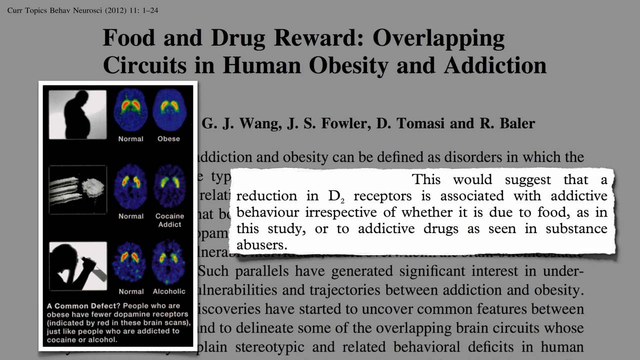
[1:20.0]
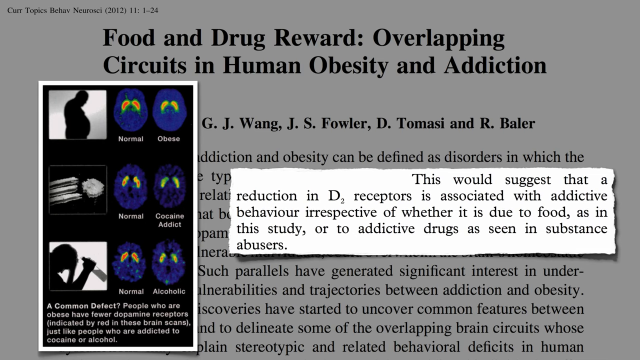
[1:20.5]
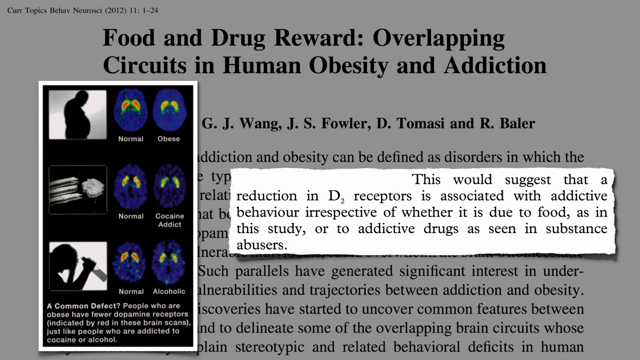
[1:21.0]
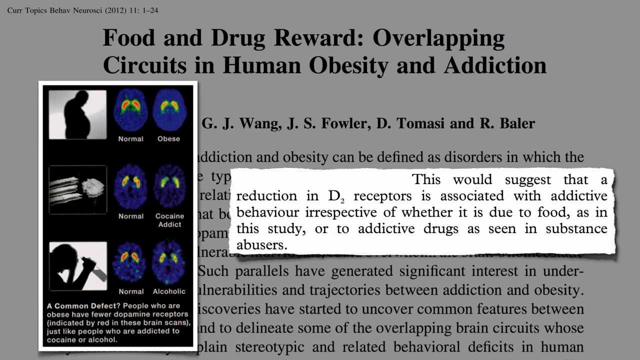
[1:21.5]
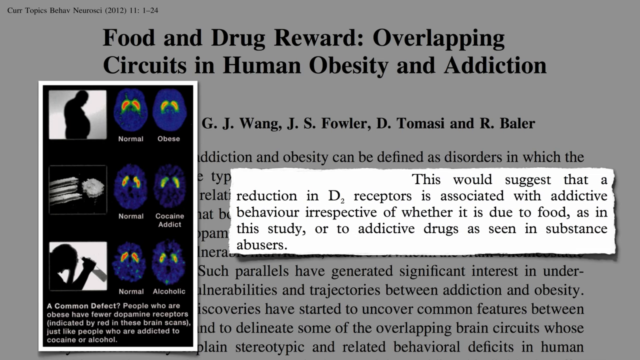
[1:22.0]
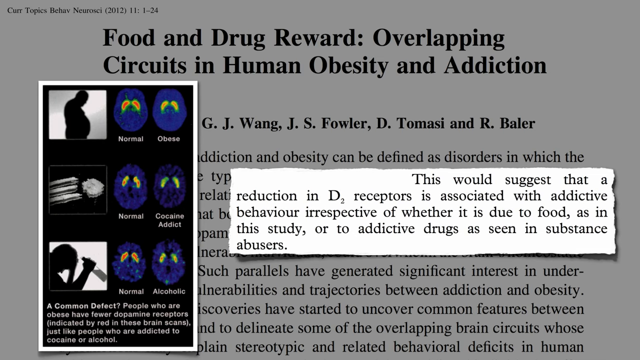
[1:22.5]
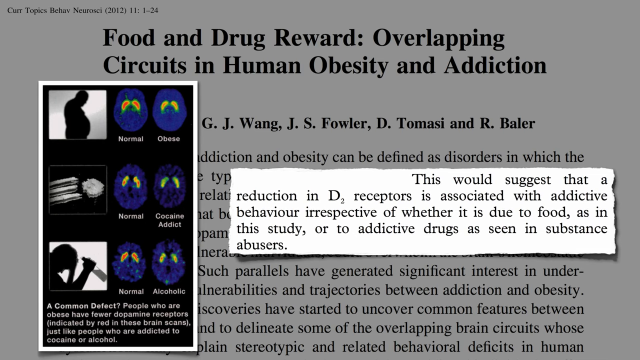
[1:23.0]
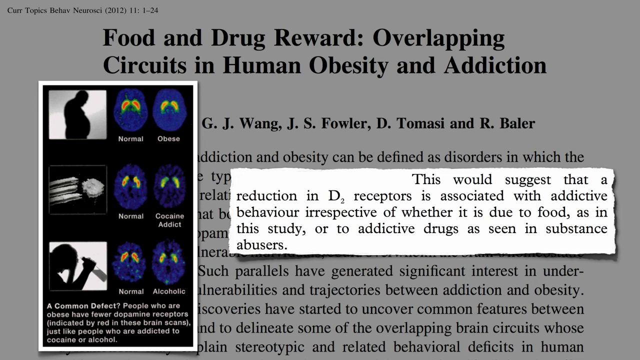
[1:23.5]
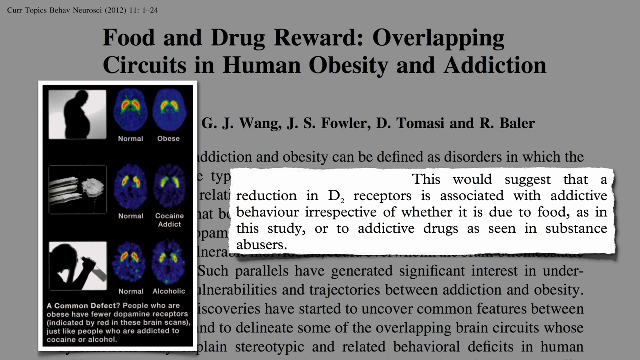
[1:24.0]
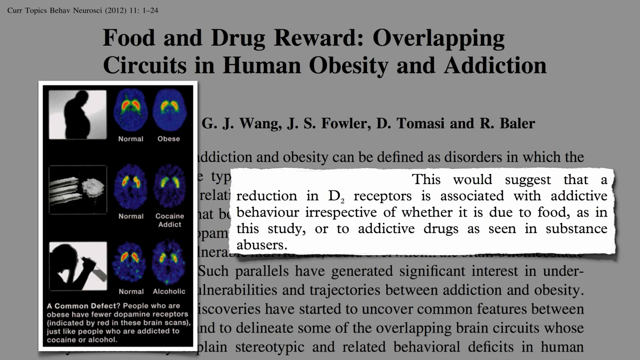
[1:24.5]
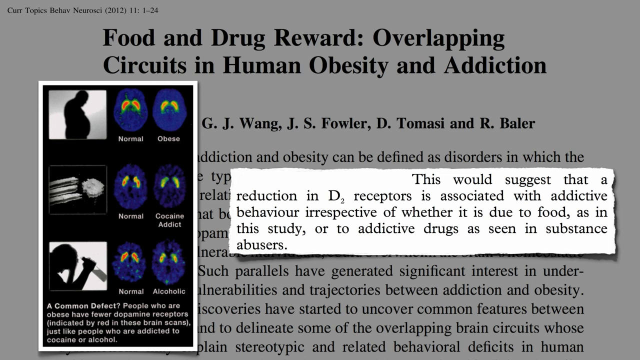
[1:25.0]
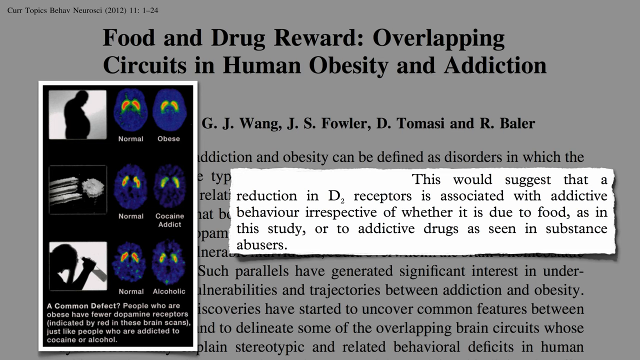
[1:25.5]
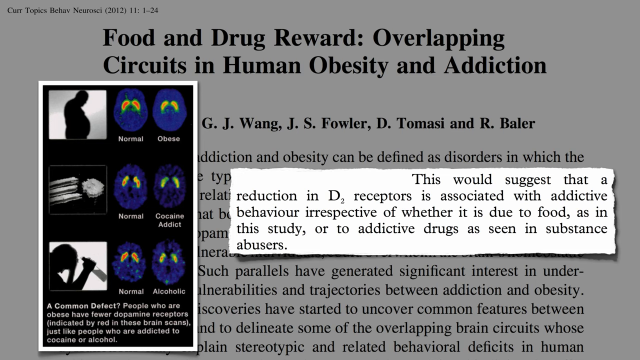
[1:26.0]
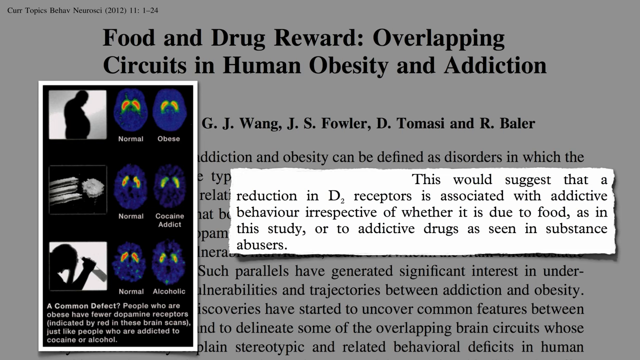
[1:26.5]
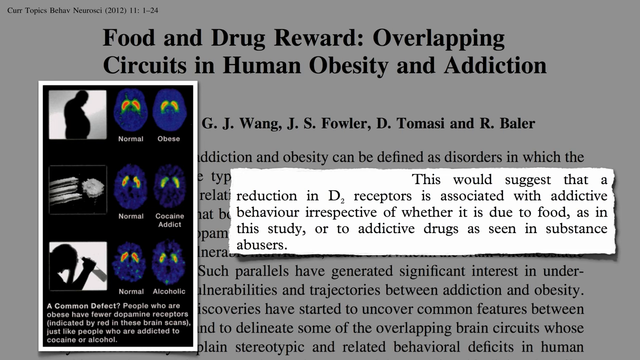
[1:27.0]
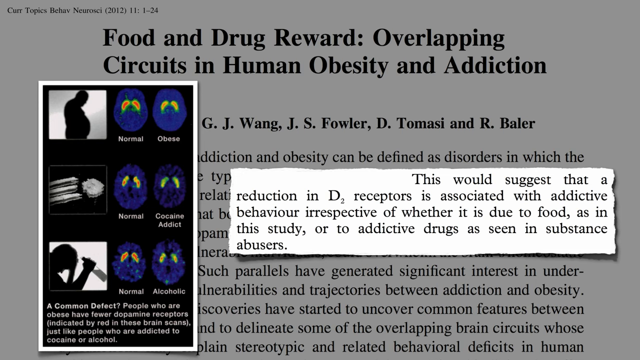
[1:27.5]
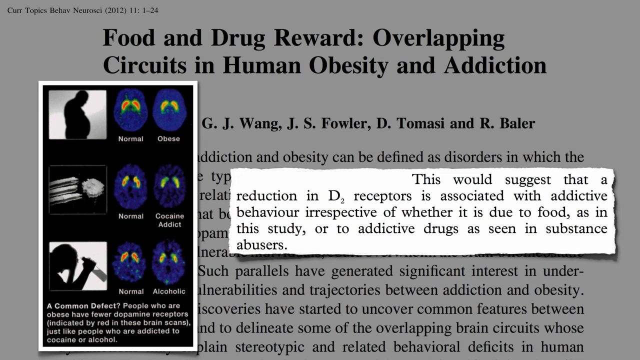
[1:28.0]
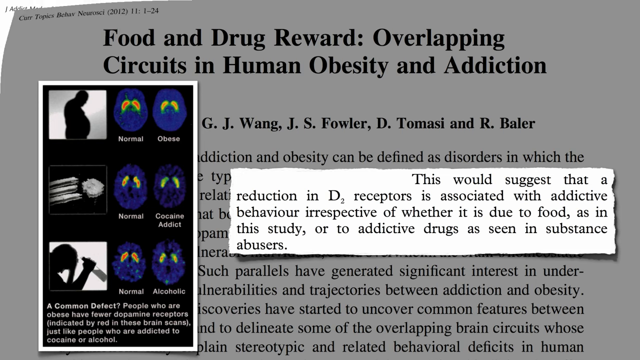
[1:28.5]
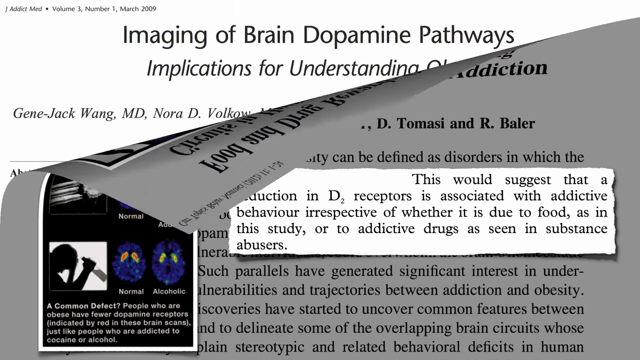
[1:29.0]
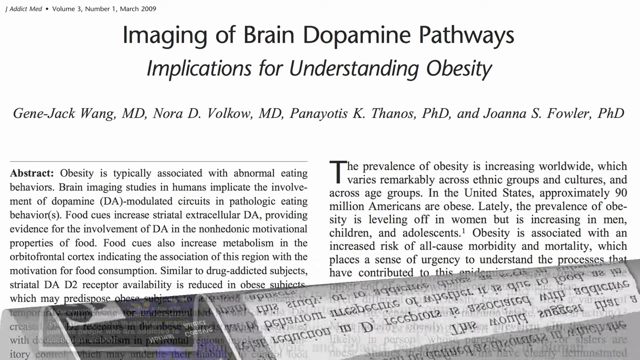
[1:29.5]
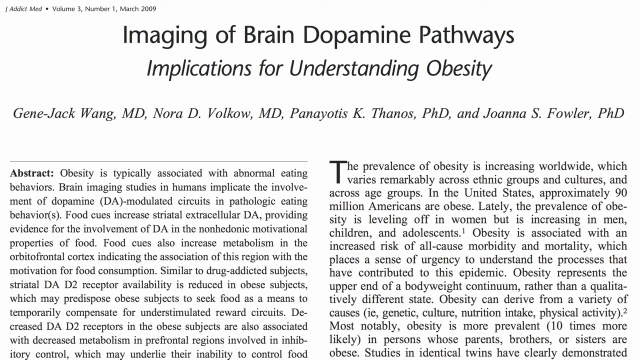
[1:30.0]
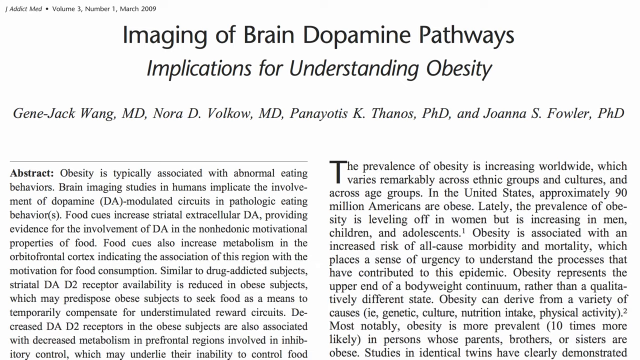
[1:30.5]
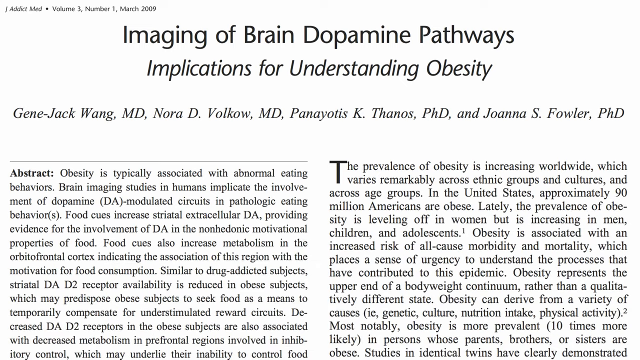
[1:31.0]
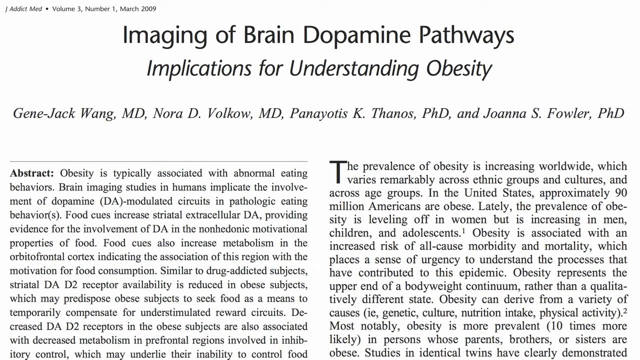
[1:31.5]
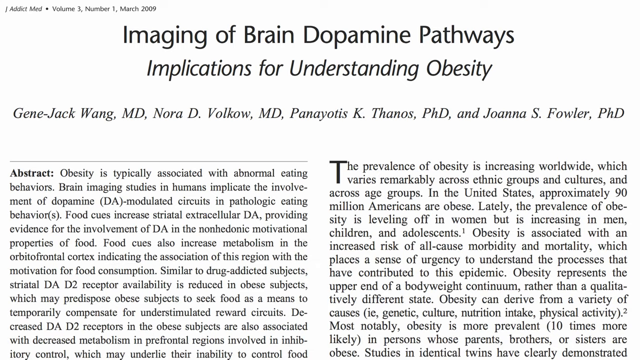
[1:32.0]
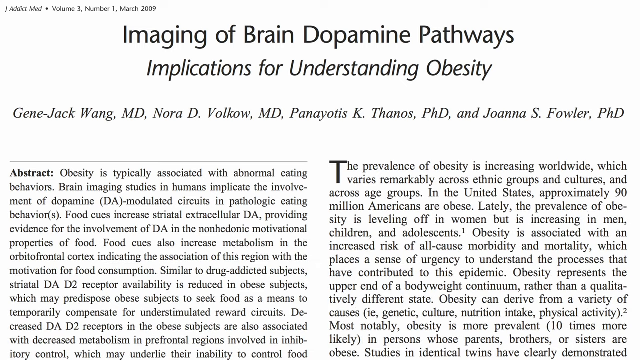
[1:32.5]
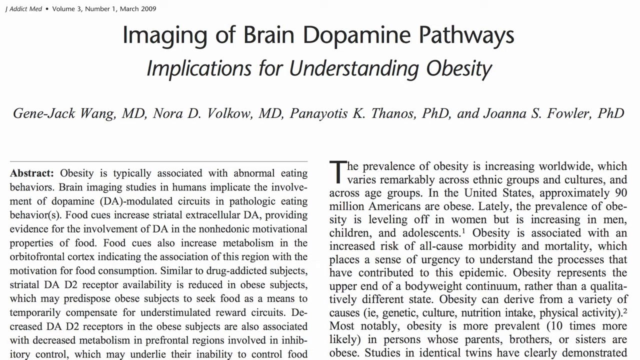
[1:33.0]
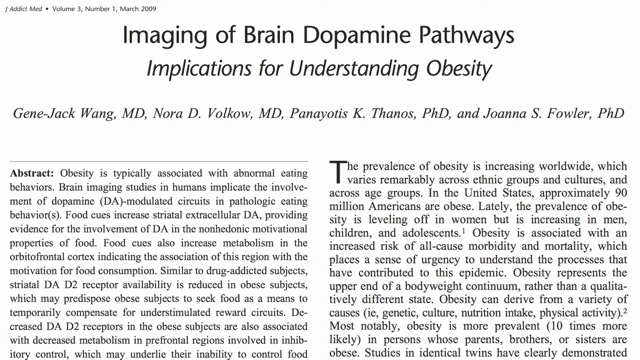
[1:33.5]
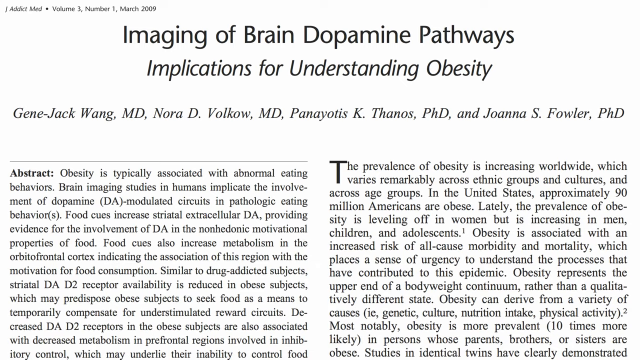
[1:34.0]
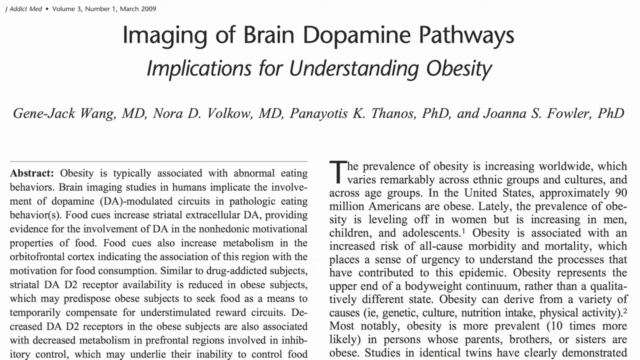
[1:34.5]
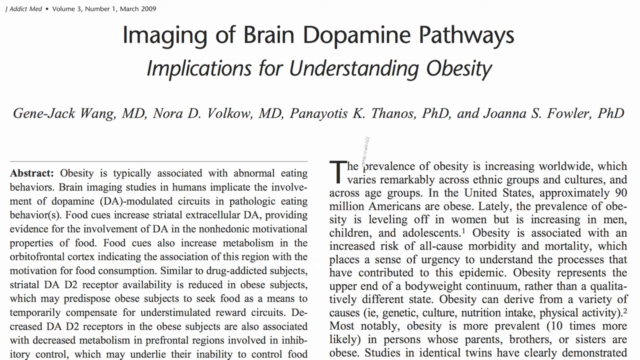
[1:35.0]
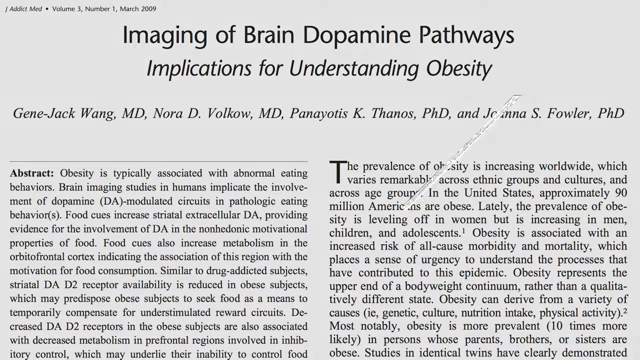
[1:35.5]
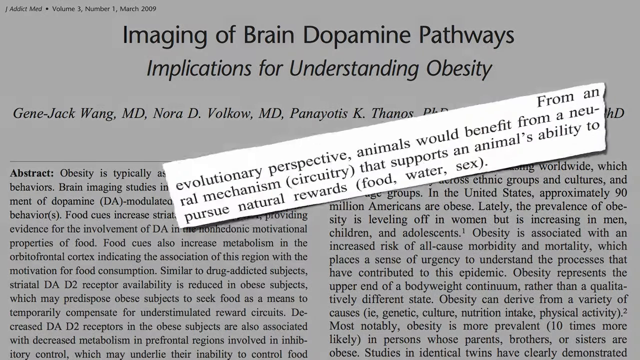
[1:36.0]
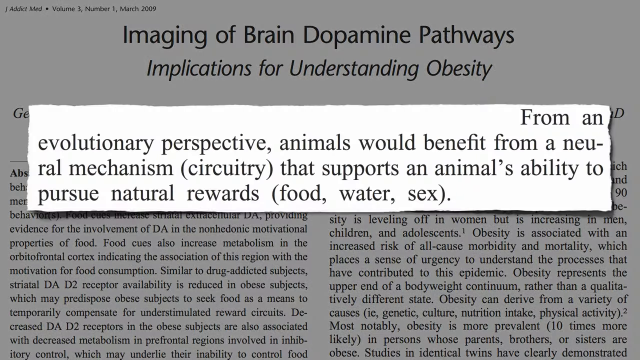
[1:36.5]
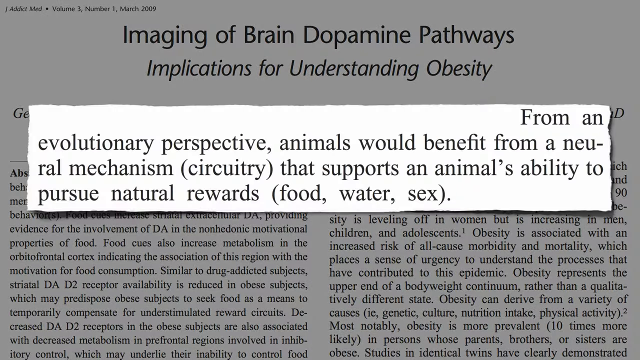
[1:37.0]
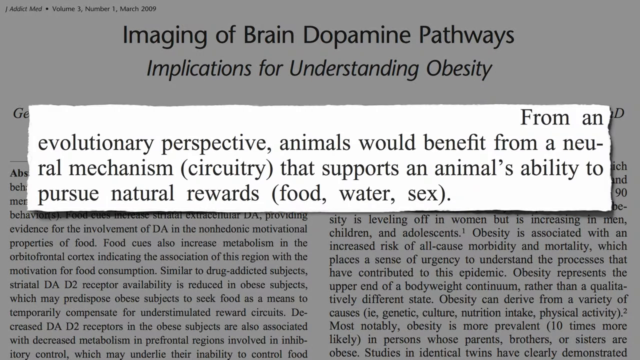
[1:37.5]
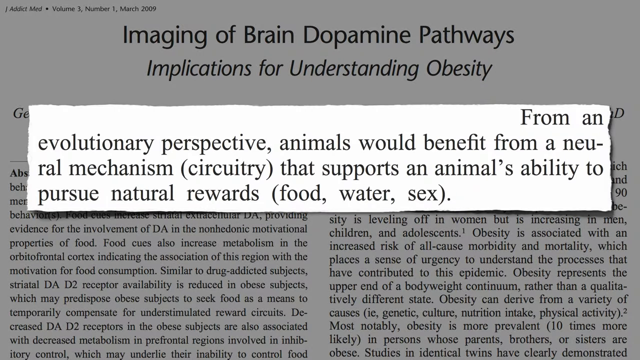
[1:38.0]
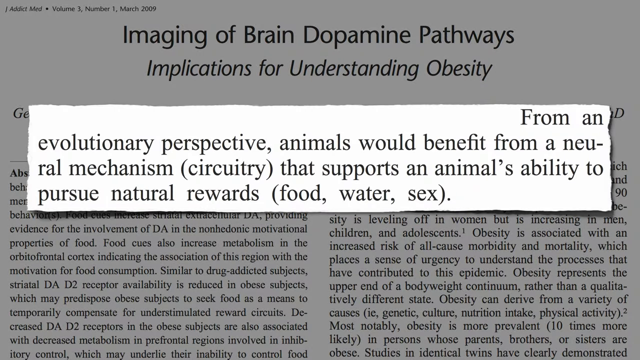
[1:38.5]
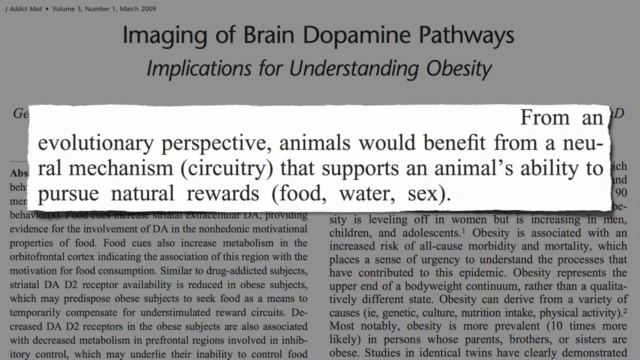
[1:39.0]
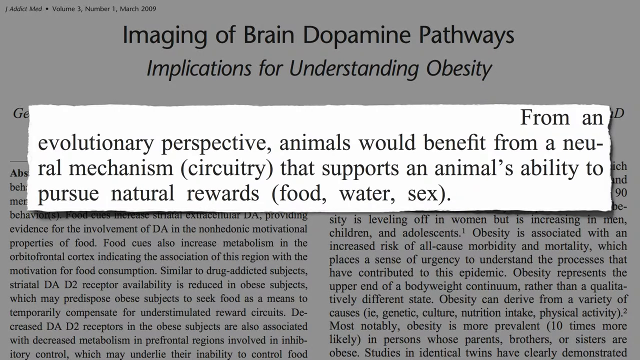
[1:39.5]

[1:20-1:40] The frame is a little wider than it is tall. An article titled "Food and Drug Reward, Overlapping Circuits in Human Obesity and Addiction" is grayed out, except for two things overlaid on top of it. On the left-hand side are three black-and-white pictures stacked vertically, and to the right of each of them are two brain scans. The first pair is labeled "normal" and "obese", the second "normal" and "cocaine addict", and the third "normal" and "alcoholic". On the right is a blown-up paragraph in black text that says: "this would suggest that a reduction in D2 receptors is associated with addictive behavior, irrespective of whether it is due to food, as in this study, or addictive drugs, as seen in substance abusers."